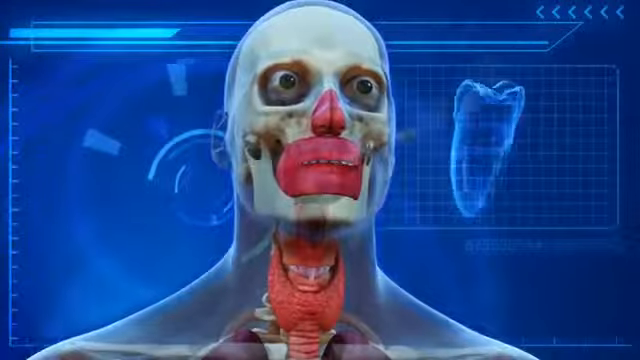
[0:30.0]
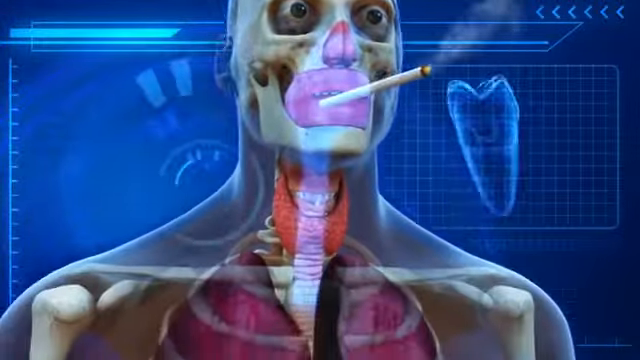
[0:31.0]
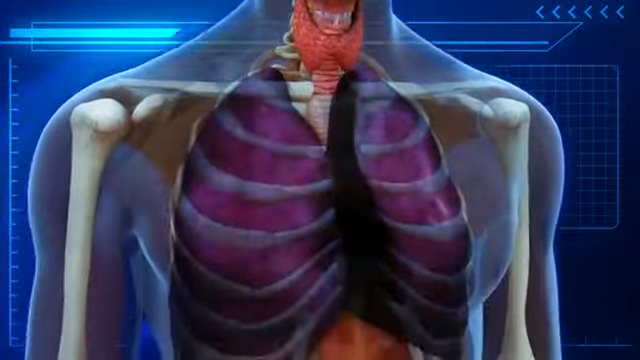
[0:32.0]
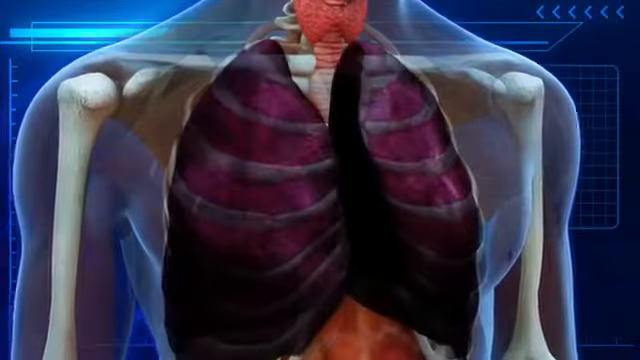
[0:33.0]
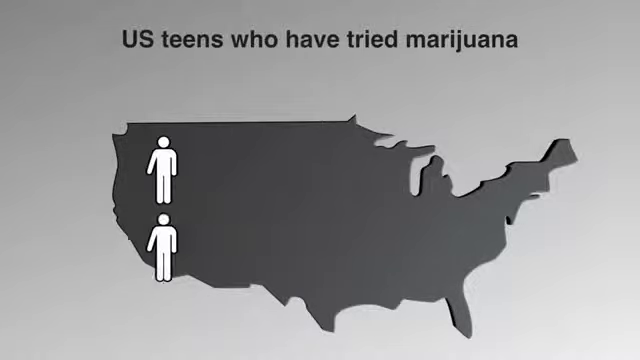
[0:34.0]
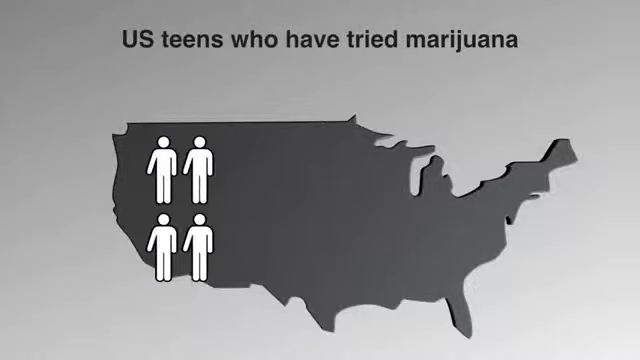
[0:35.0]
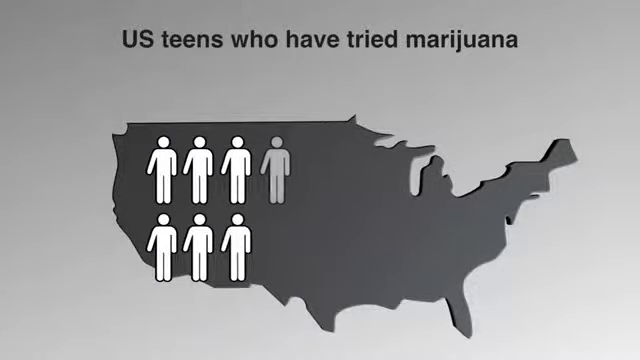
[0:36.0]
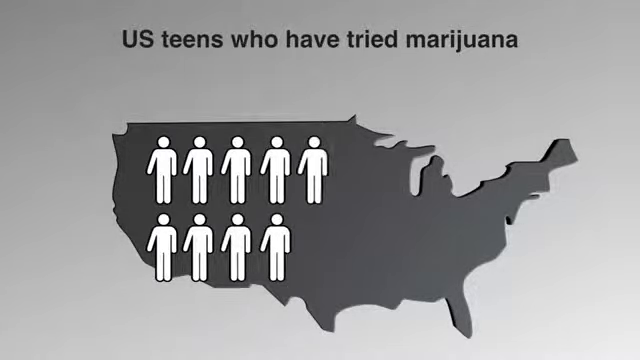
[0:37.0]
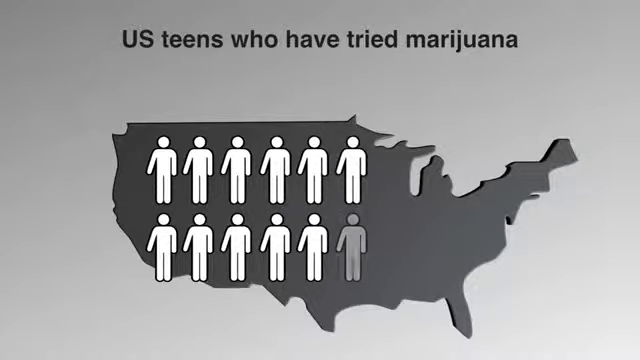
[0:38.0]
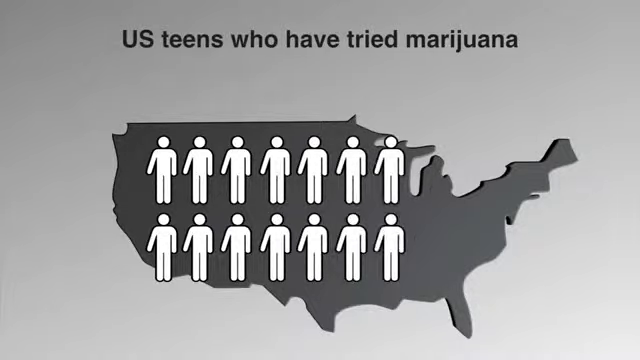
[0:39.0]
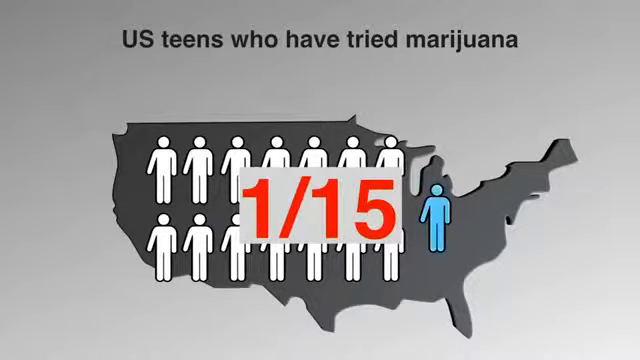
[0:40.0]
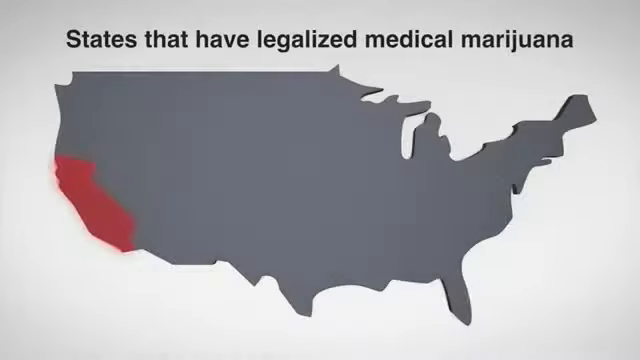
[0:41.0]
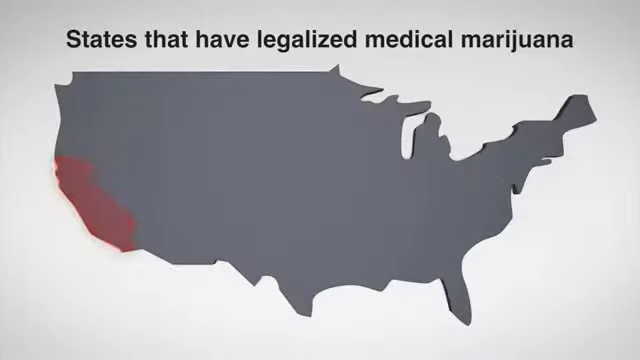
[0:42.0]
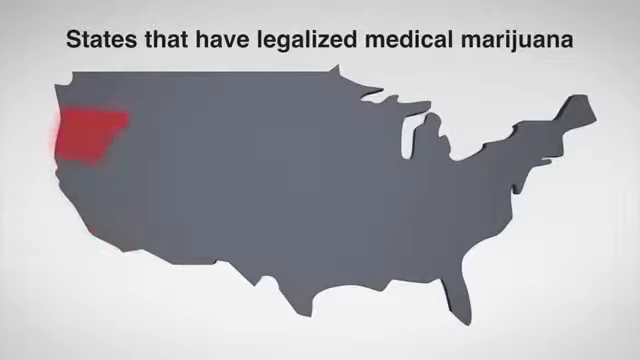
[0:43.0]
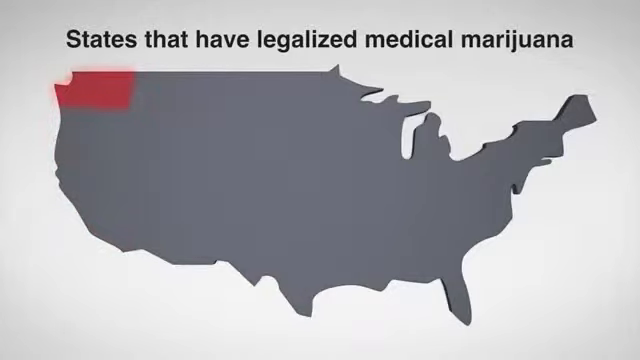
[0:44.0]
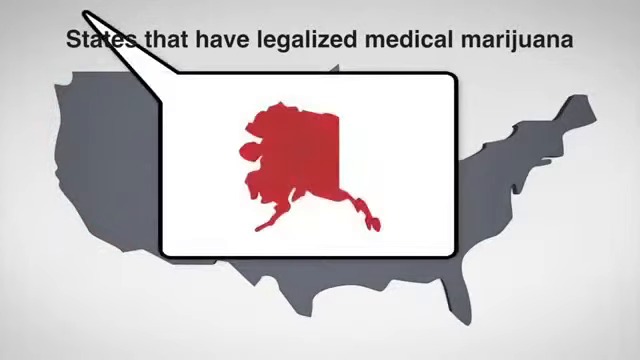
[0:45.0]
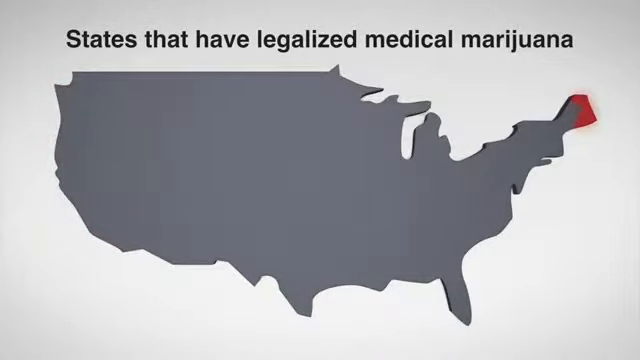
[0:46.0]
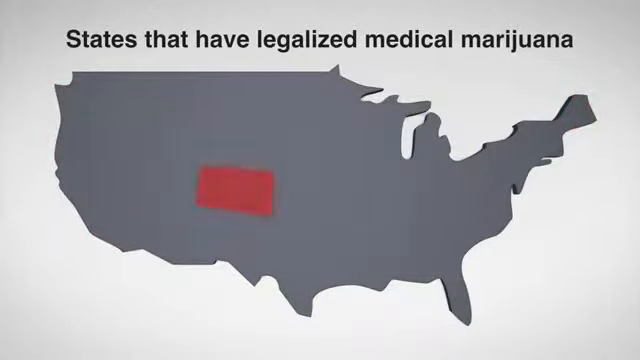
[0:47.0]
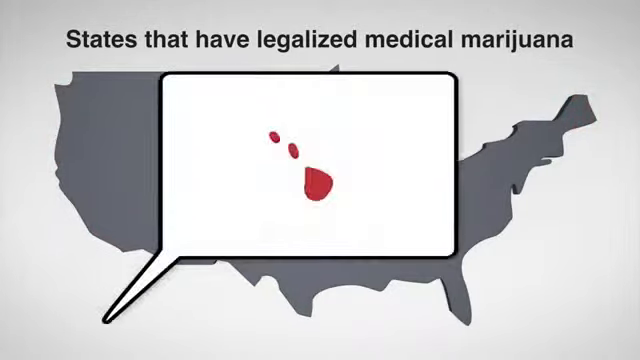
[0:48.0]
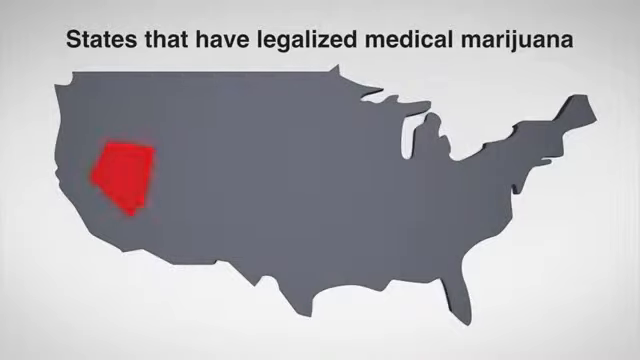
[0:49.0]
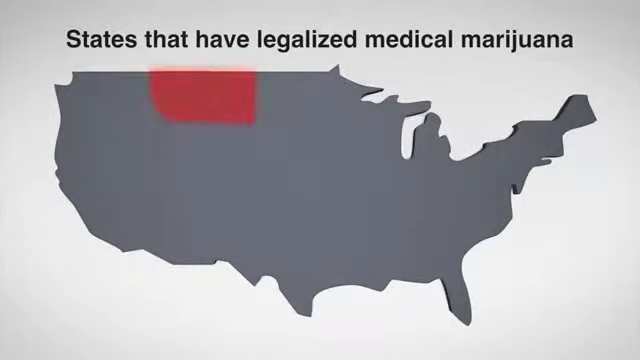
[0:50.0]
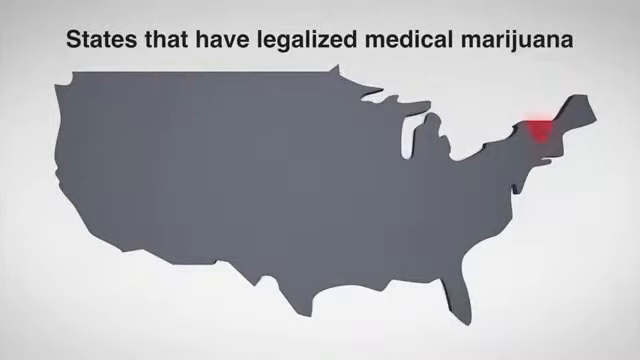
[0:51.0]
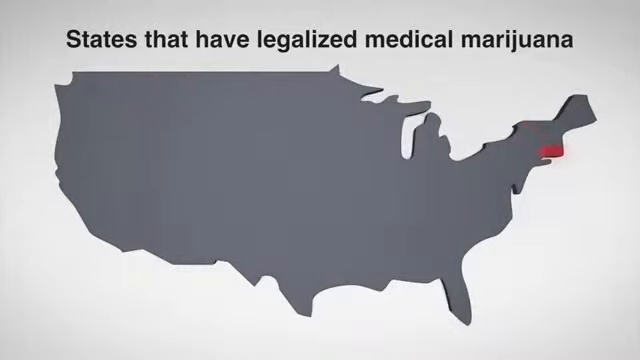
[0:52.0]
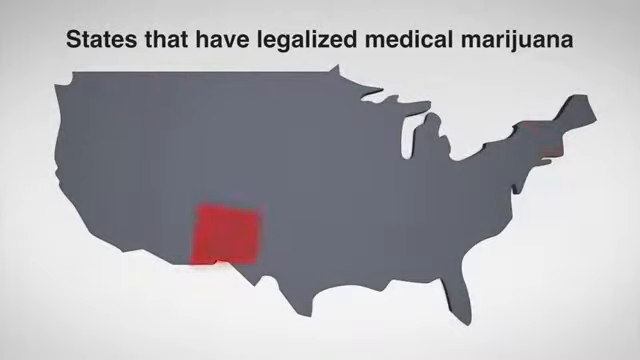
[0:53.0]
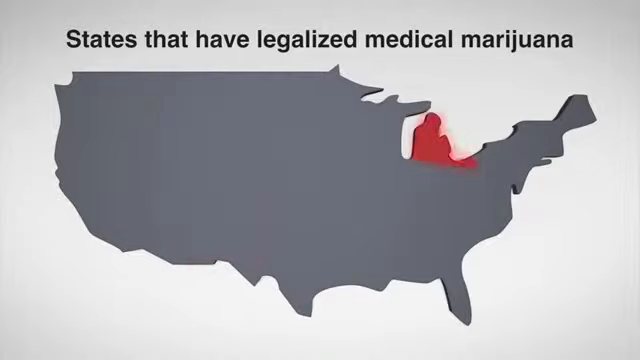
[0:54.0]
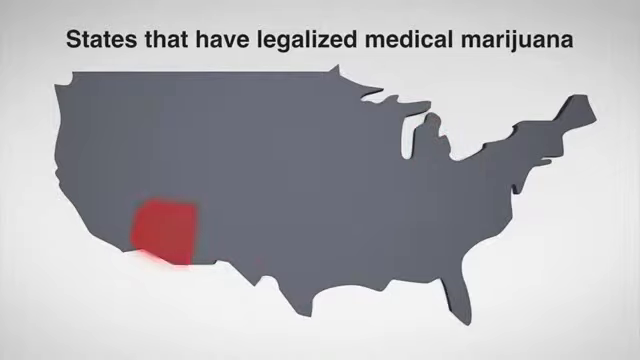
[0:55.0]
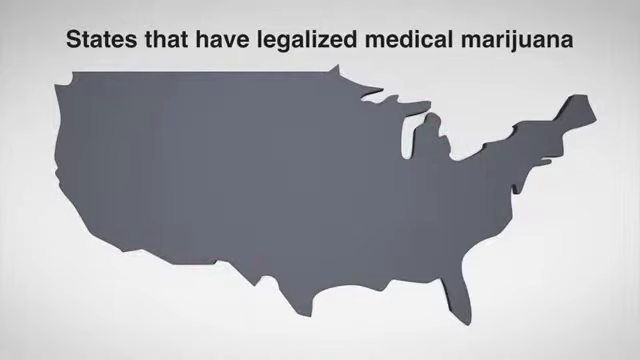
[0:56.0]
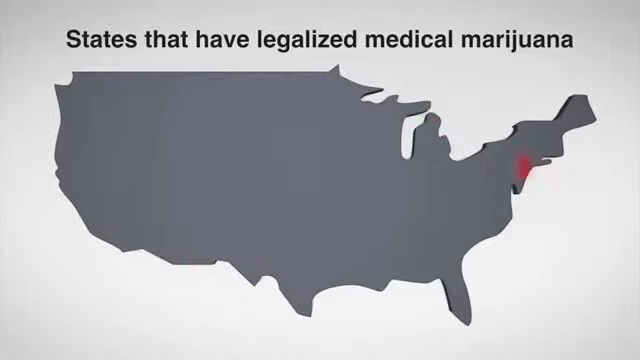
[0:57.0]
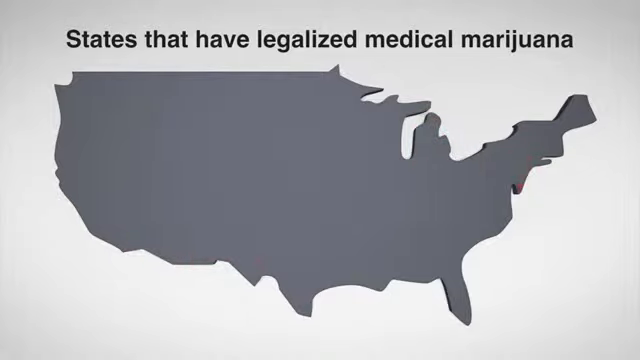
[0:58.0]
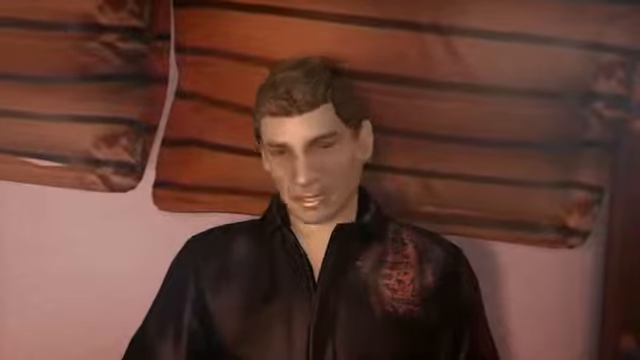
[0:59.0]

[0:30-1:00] The skeleton body takes a puff from the cigarette. Smoke is visible, and the esophagus is highlighted as if the smoke is going down the throat; the lungs then turn dark again, seemingly to indicate that the smoke has harmed them. The scene cuts to a gray map of the United States with the text "U.S. teens who have tried marijuana." Small white clipart human figures, like those on restroom signs, appear from left to right until they cover the whole map, and "1 out of 15" appears in red text. At the very end, the furthest-right figure is highlighted in blue. Another gray map of the United States follows, with "states that have legalized medical marijuana" at the top. California, Oregon, Washington and Alaska are highlighted in red one after another.